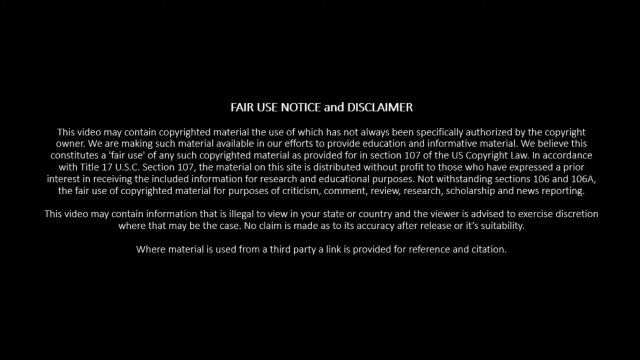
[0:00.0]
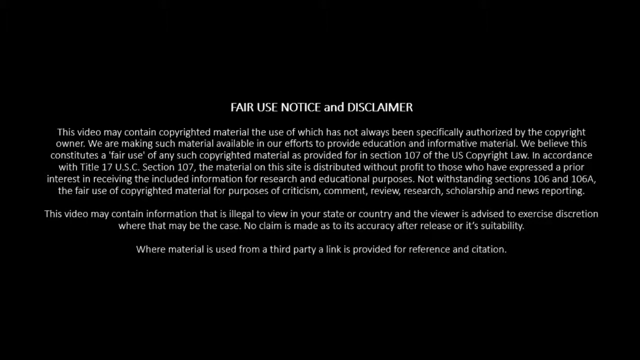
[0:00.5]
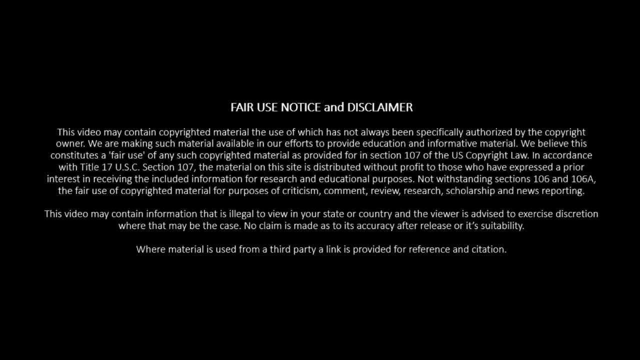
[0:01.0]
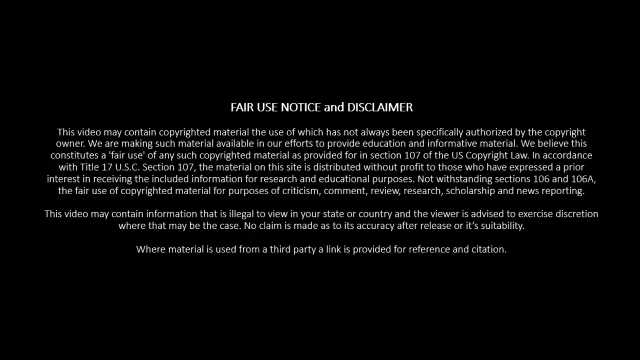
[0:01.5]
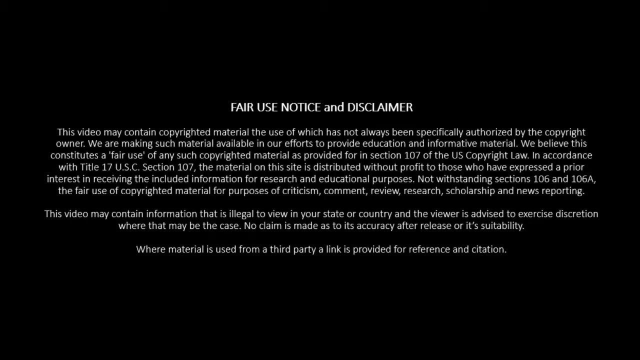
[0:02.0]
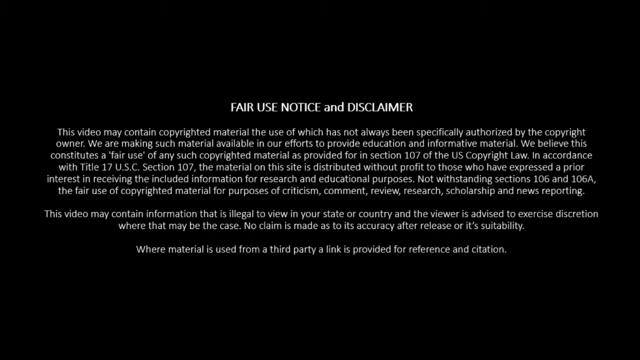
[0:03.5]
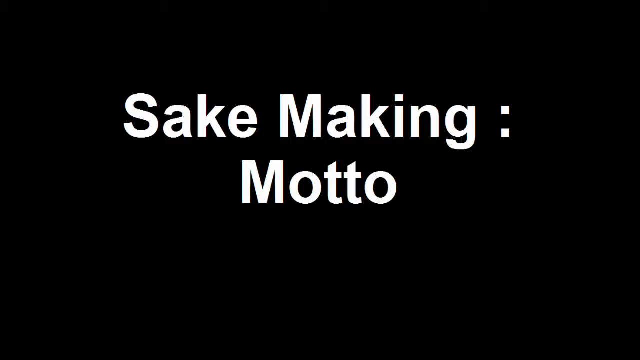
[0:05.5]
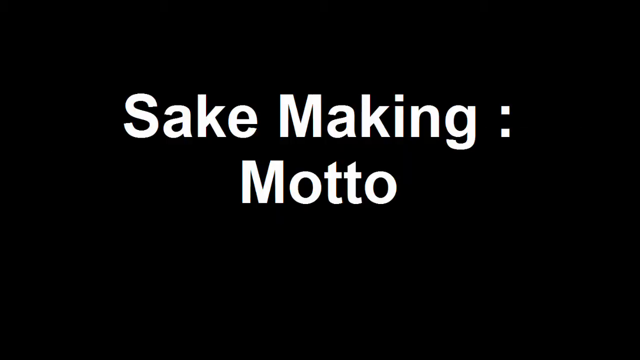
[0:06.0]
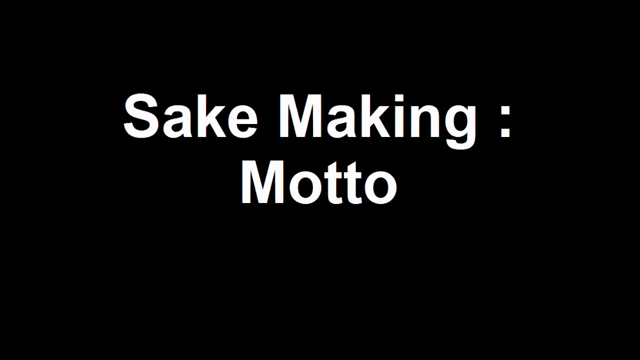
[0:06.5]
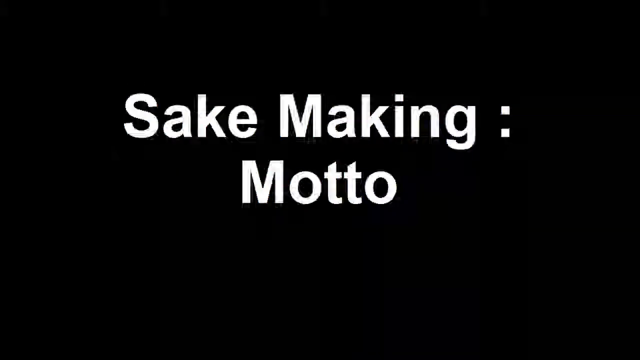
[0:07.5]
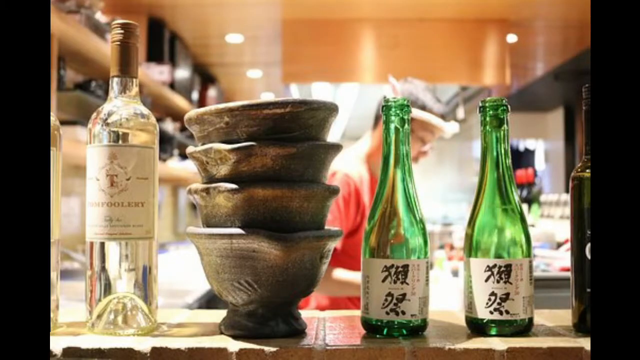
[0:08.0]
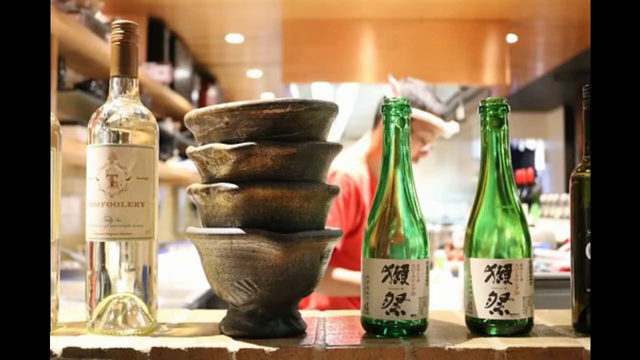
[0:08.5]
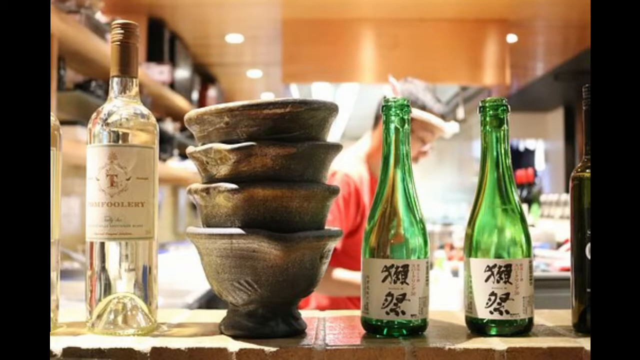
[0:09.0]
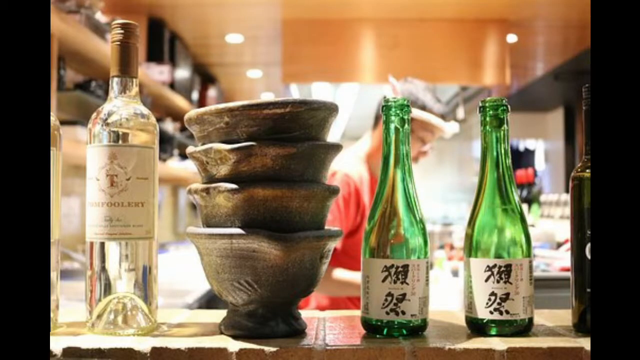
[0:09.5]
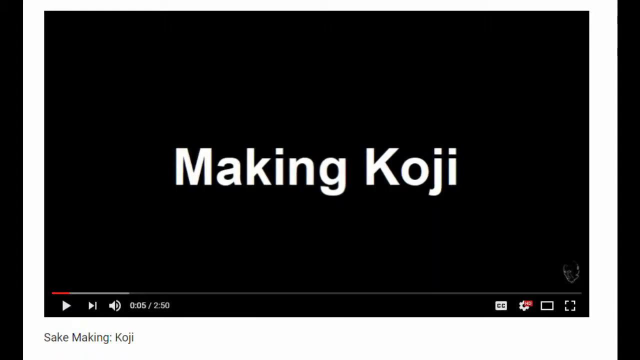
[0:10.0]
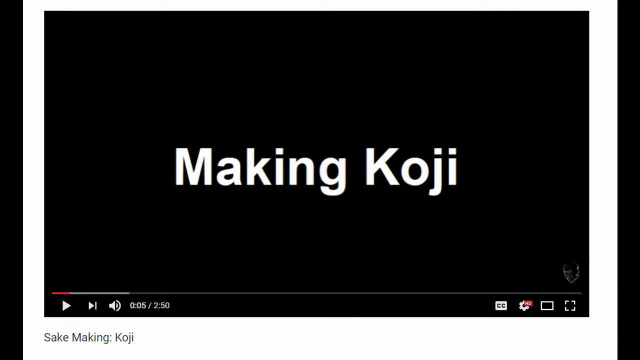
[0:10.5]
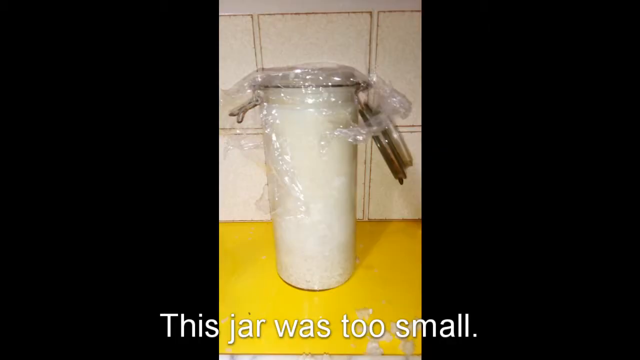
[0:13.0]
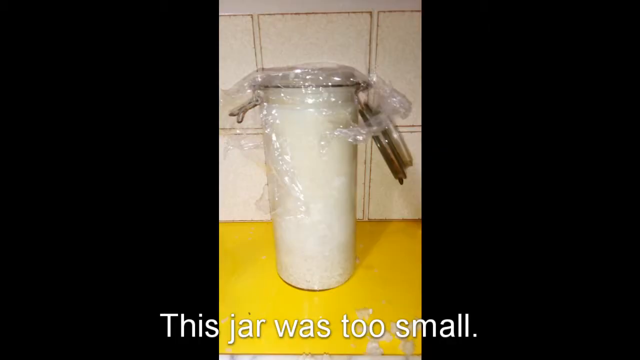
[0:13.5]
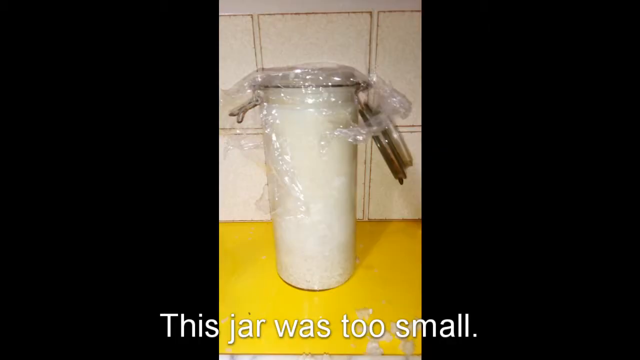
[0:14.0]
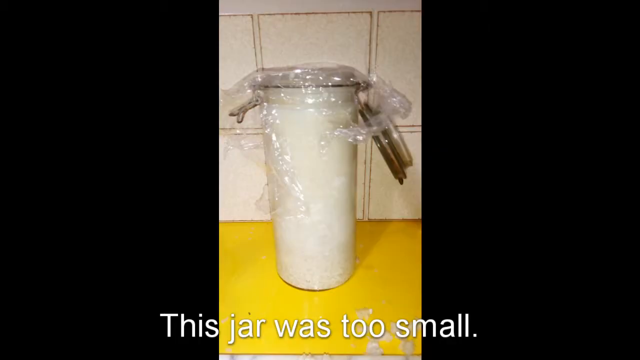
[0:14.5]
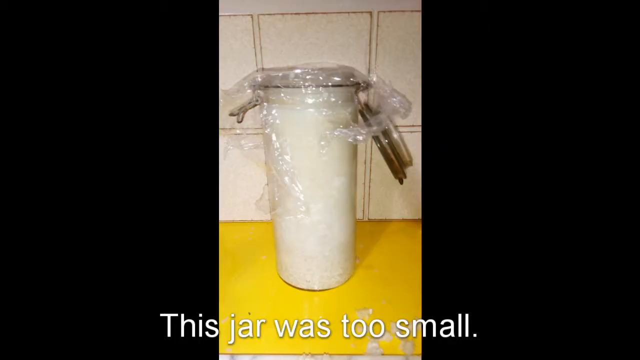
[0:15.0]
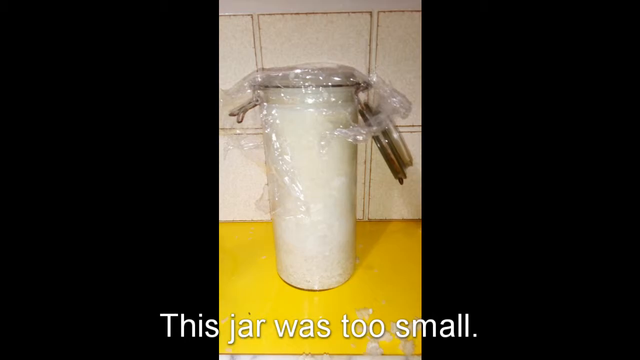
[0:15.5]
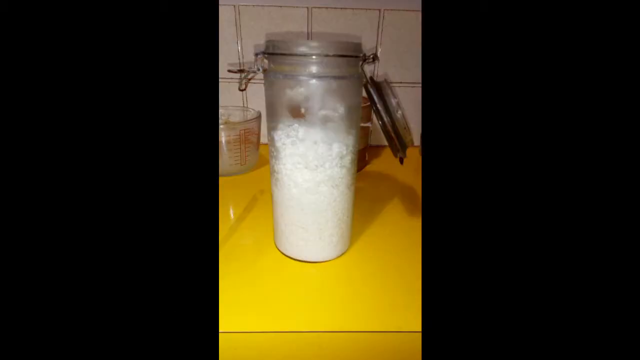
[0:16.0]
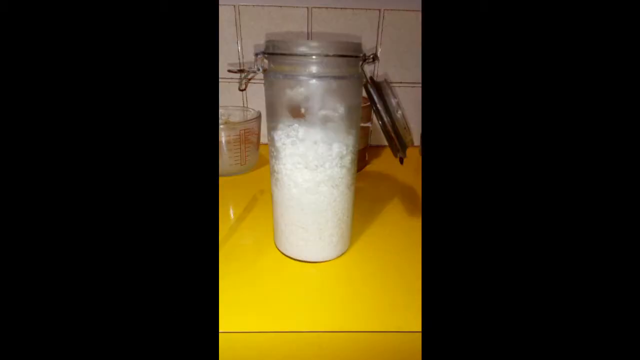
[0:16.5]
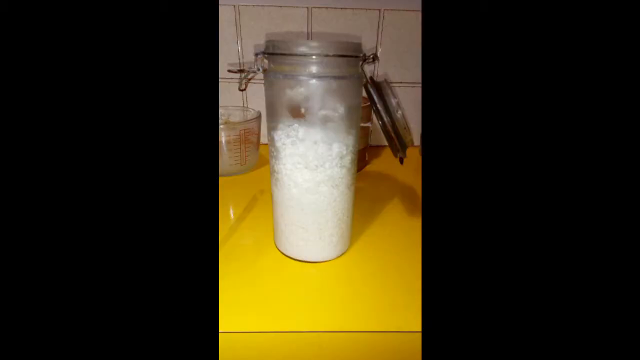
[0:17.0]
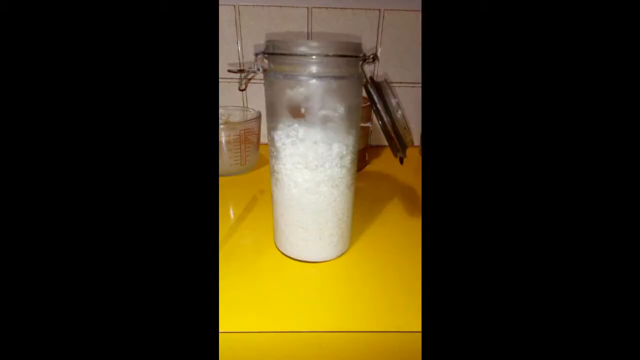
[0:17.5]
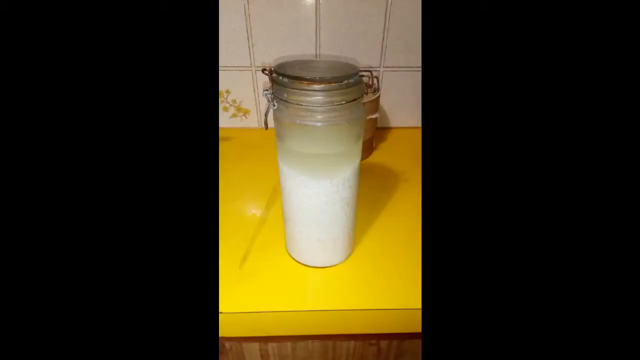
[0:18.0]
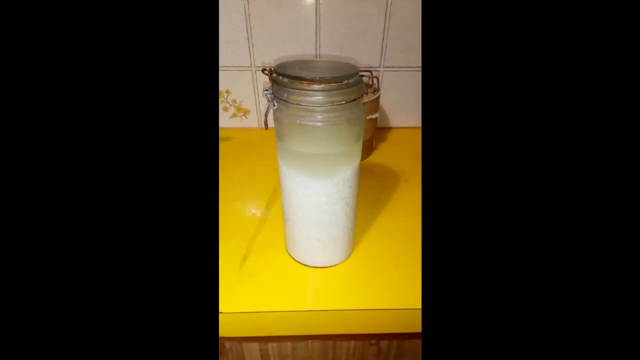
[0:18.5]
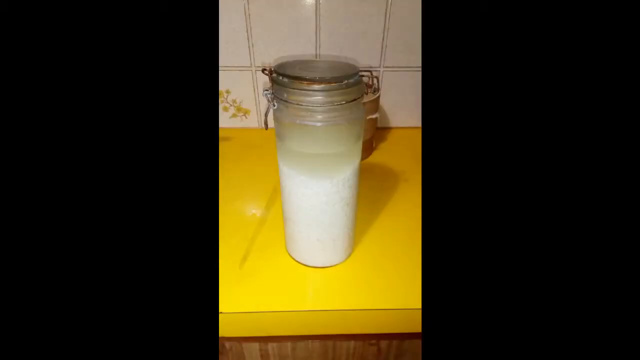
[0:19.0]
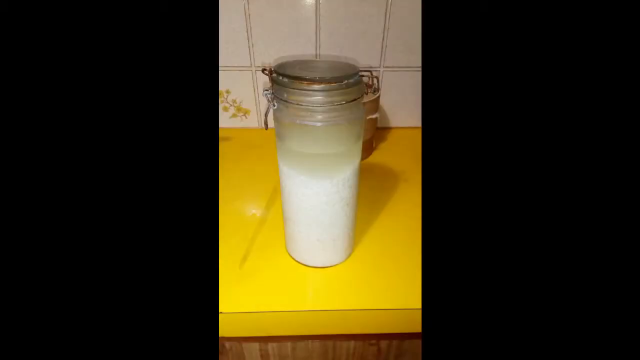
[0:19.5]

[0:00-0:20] The video opens on a black background with white text reading "Fair Use Notice and Disclaimer." The text continues: "This video may contain copyrighted material, the use of which has not always been specifically authorized by the copyright owner. We are making such material available in our efforts to provide education and informative material." It also refers to Section 107 of the U.S. Copyright Law and states: "In accordance with Title 17 U.S.C. Section 107, the material on this site is distributed without profit to those who have expressed a prior interest in receiving the included material for research and educational purposes." Another black screen with white text follows, reading "Sake Making: Motto," and then a picture of a couple of sake bottles in a Japanese restaurant appears. Next comes a YouTube channel titled "Sake Making: Koji," while the text on the video reads "Making Koji."